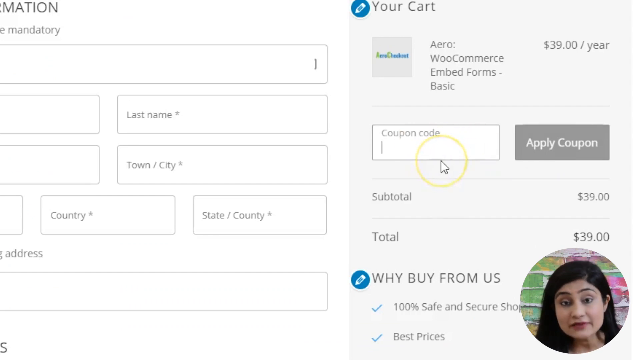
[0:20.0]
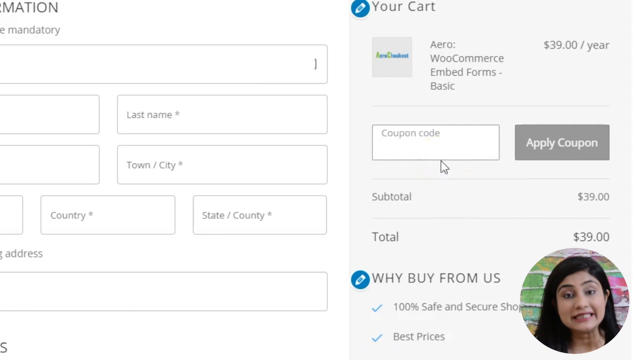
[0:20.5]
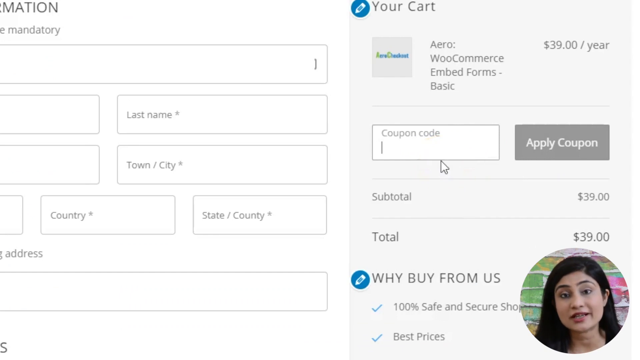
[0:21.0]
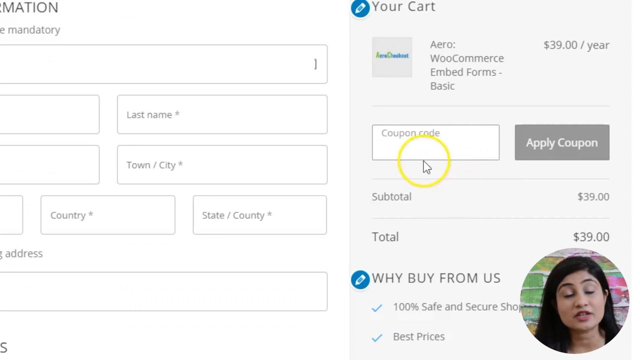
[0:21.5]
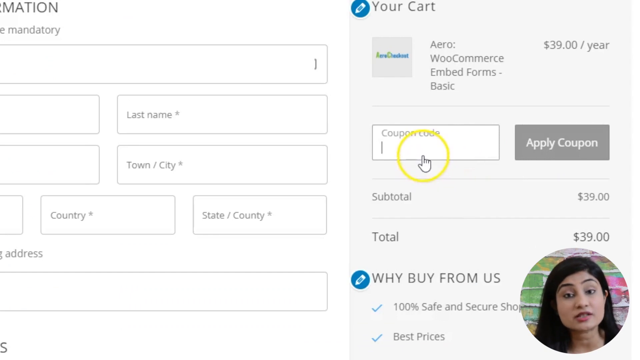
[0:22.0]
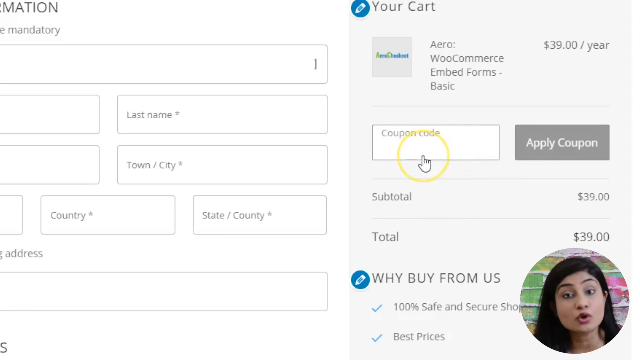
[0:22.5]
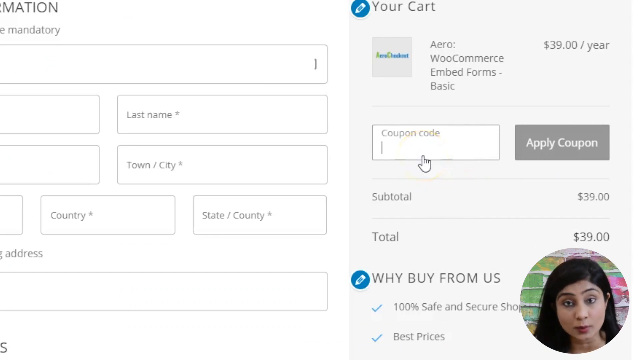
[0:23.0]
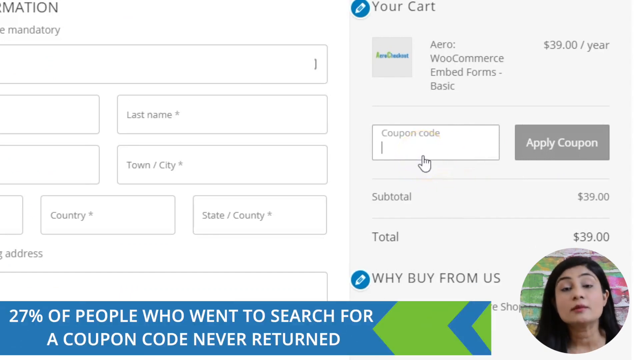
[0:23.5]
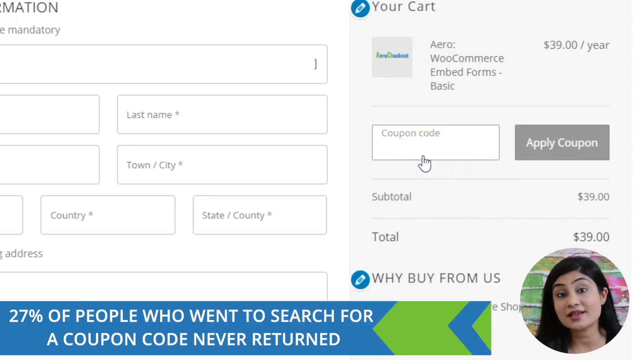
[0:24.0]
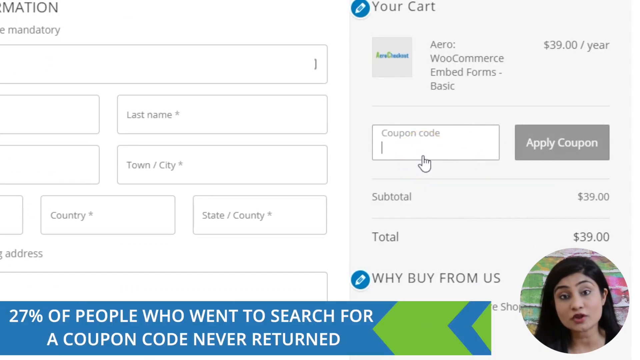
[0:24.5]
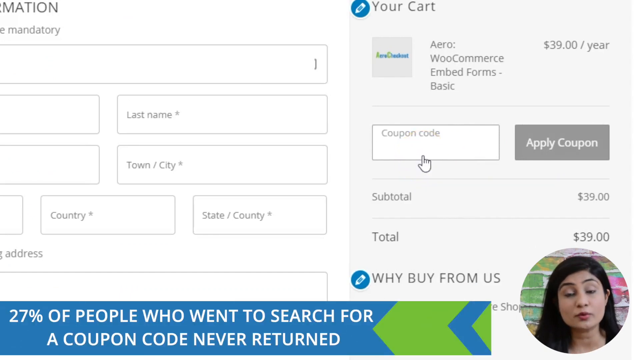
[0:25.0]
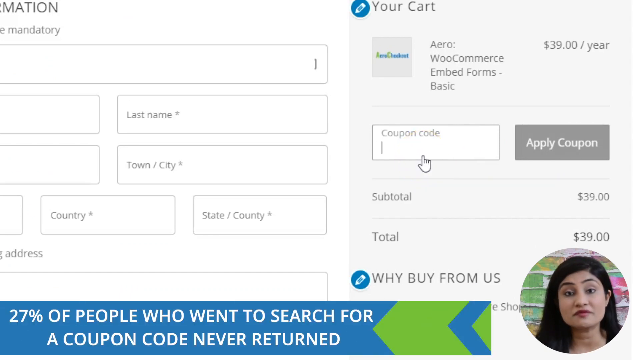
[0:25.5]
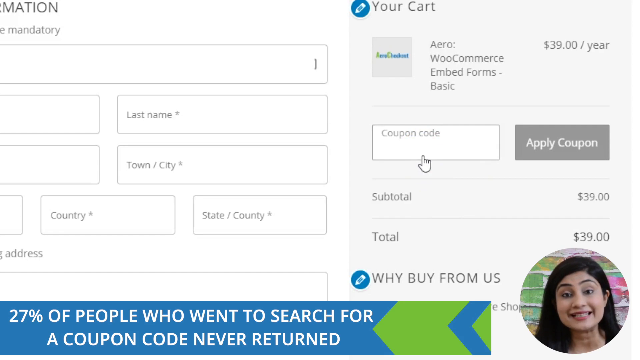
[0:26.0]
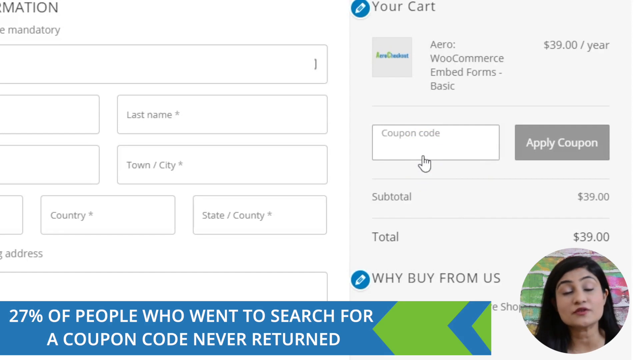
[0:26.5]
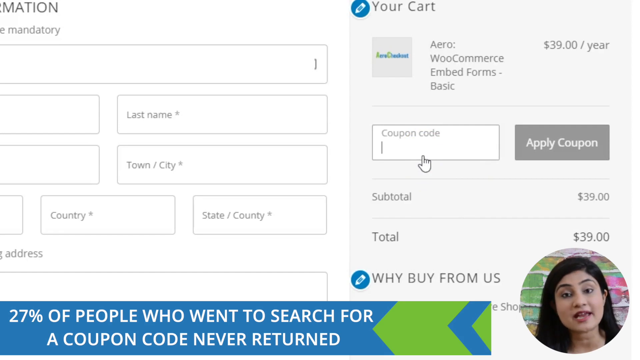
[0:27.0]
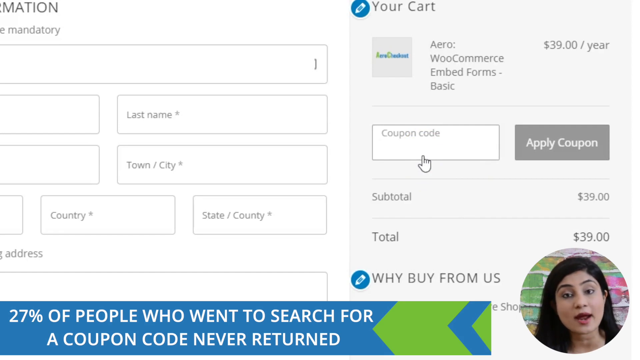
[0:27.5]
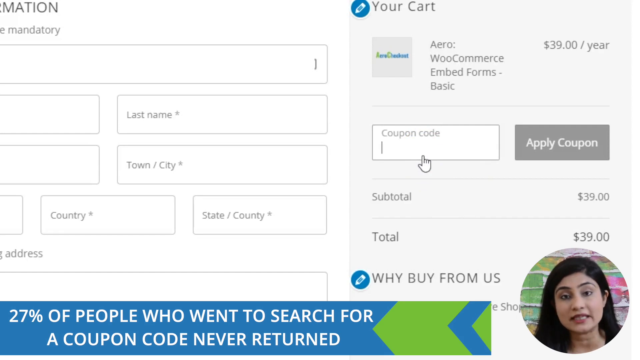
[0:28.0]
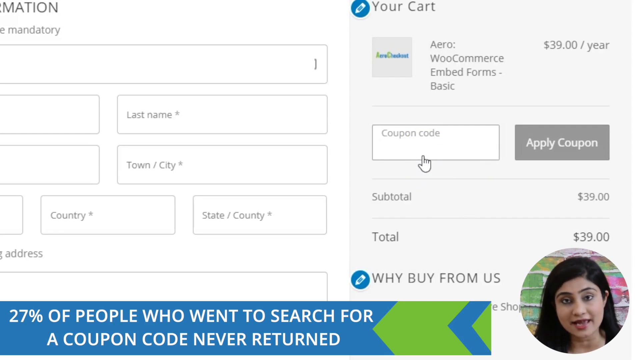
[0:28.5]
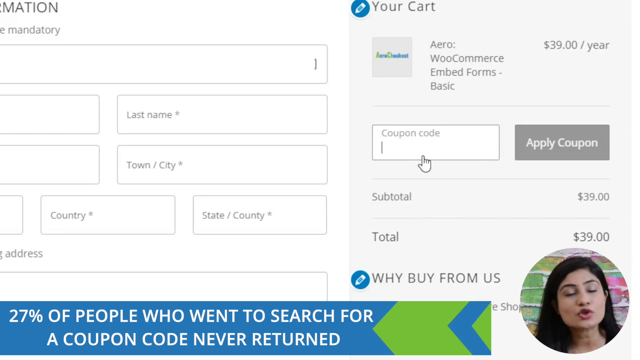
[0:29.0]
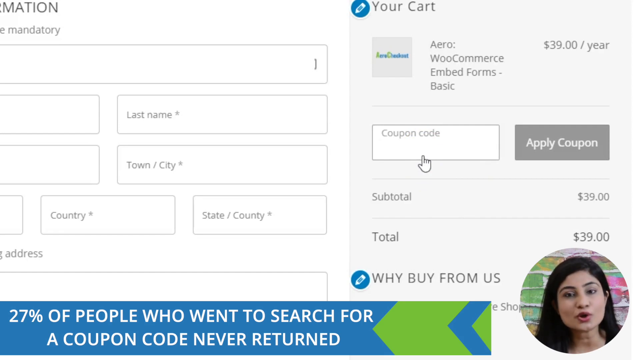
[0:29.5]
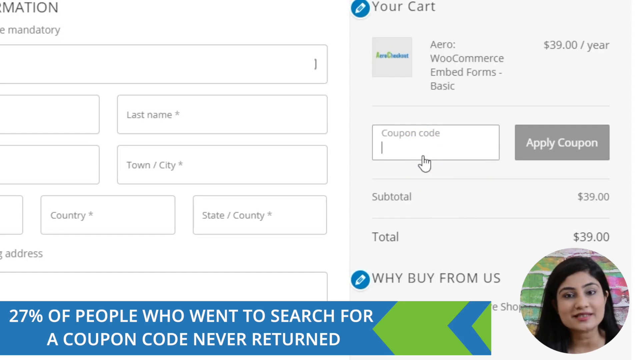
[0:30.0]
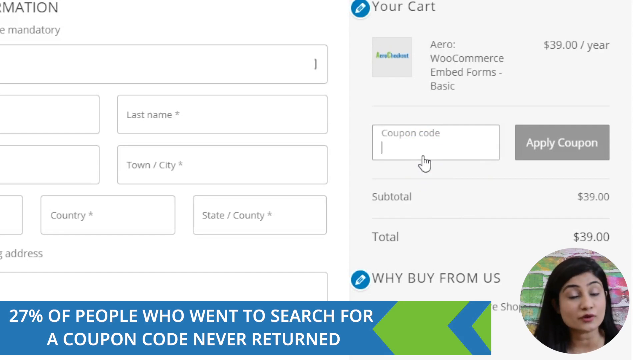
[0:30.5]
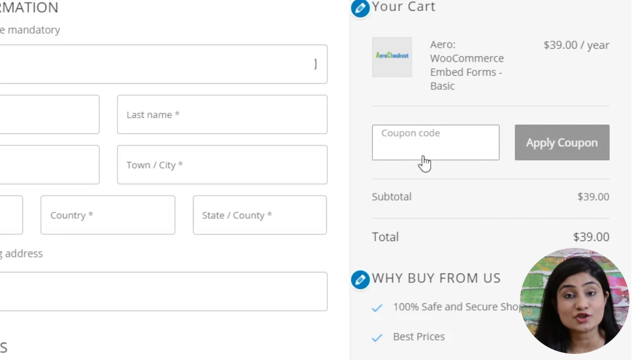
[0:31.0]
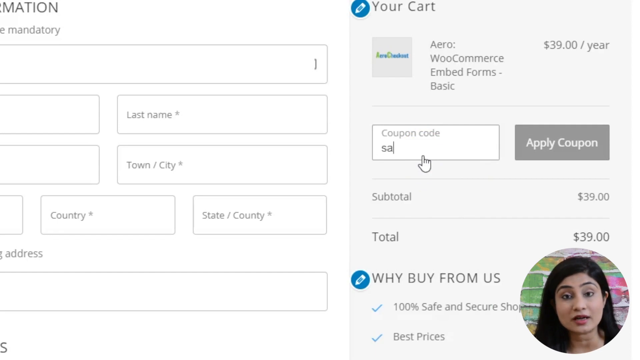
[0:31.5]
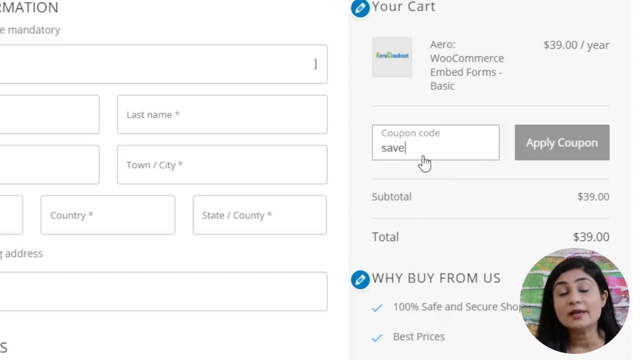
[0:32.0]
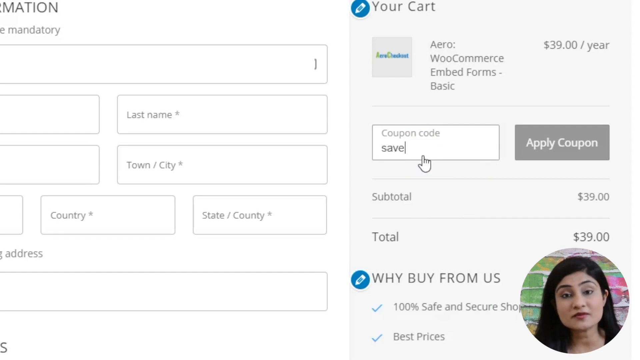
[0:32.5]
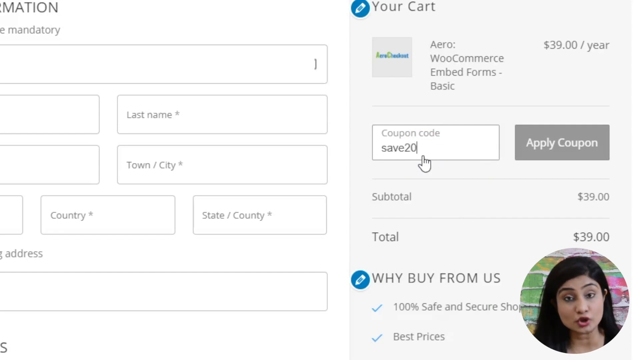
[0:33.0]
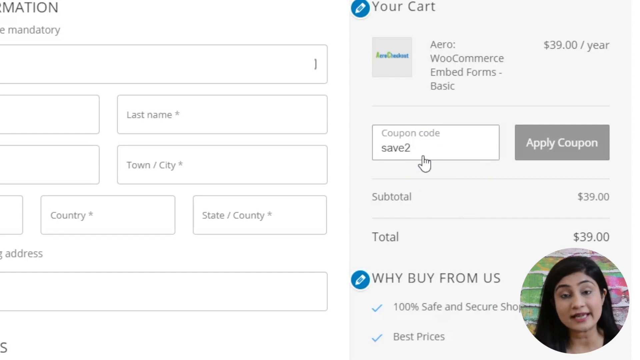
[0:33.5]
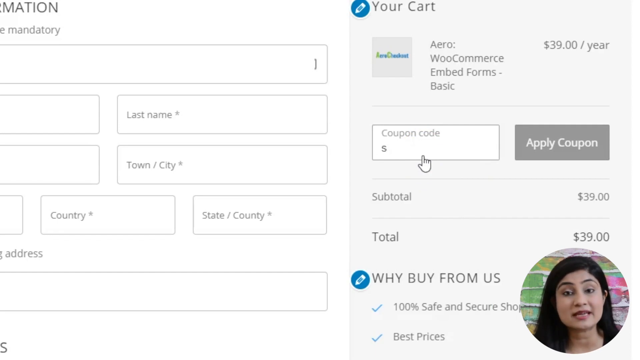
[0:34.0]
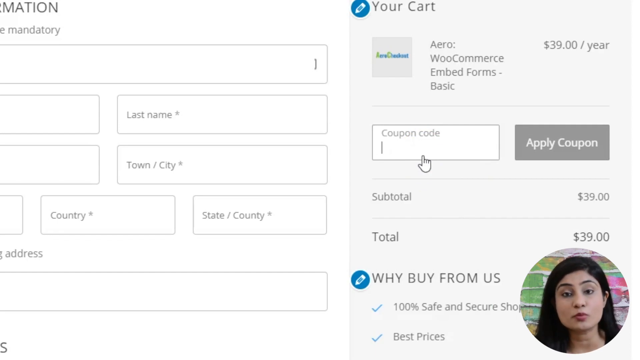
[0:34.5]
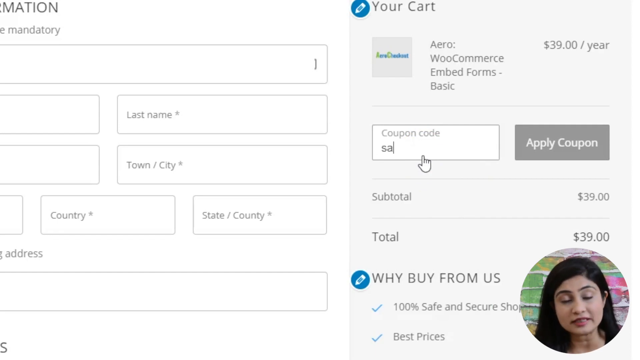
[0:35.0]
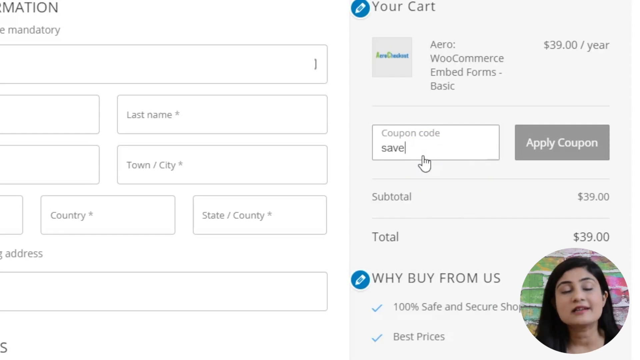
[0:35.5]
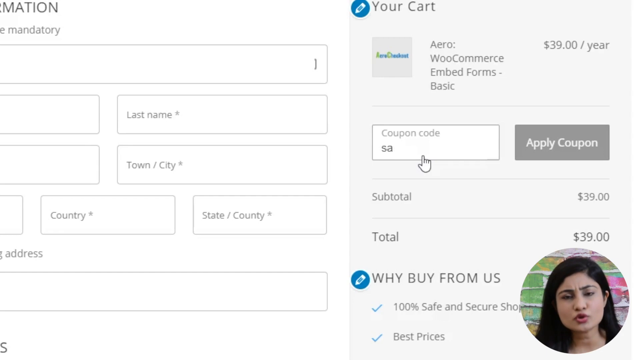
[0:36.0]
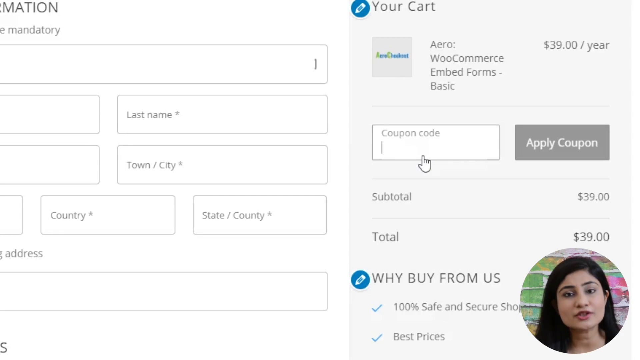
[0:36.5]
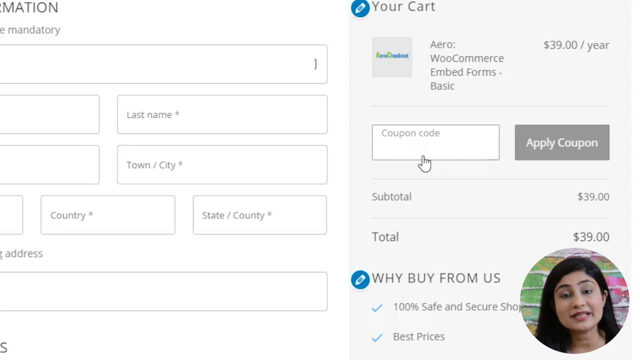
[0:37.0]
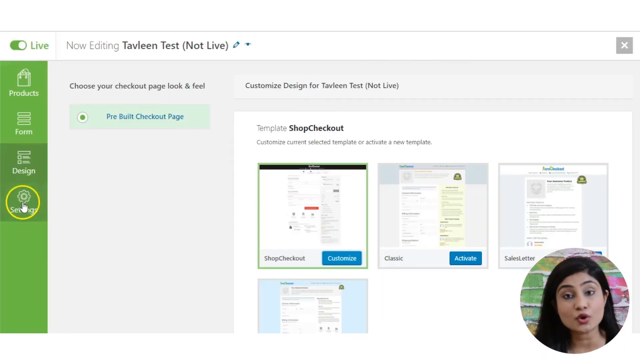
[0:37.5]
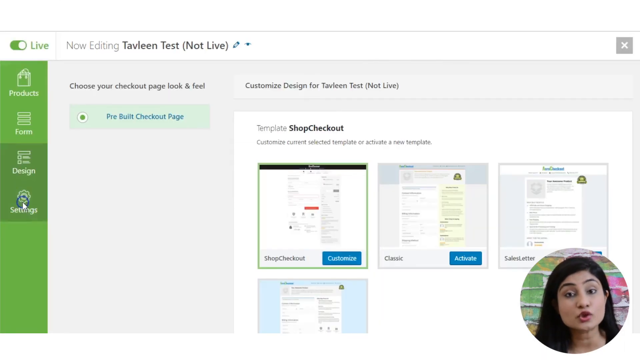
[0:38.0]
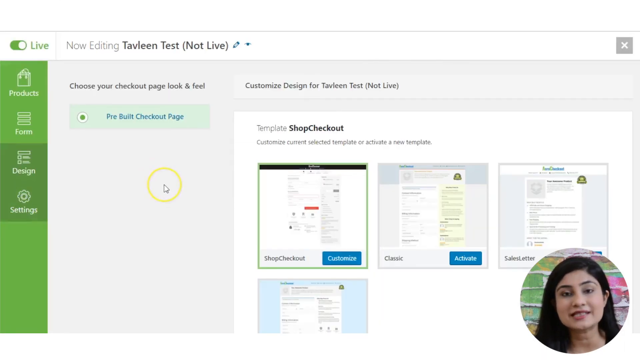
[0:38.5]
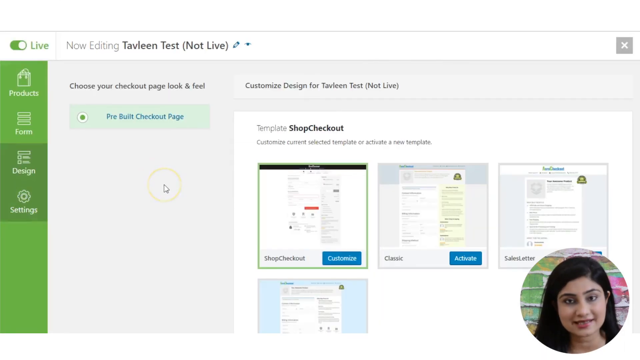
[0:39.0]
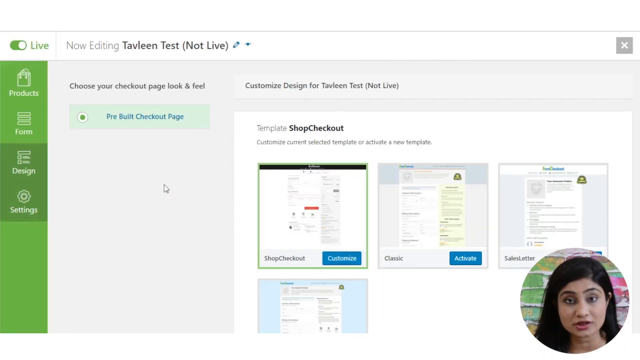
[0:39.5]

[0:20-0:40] A screen is pulled up with information being filled out. A white pointer with a yellow circle around it moves over the different areas. A woman in the lower right corner speaks directly into the camera while someone goes over items on the screen and fills out some of the boxes. The view then changes to a different screen; at the top it reads "Live Now editing Tavleen test" and then "not live." Some options on the left side are in green, and there are options for what appear to be screens of some sort.